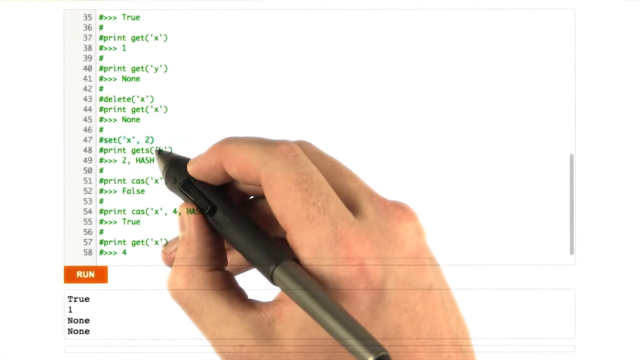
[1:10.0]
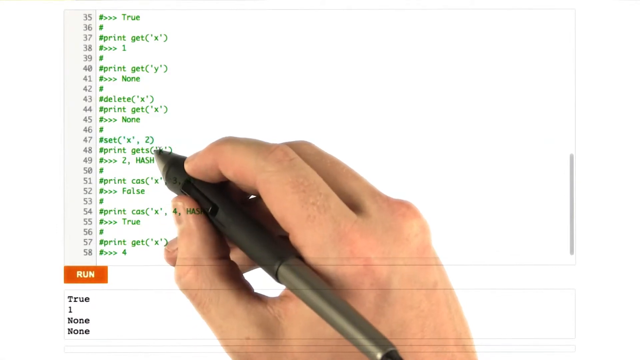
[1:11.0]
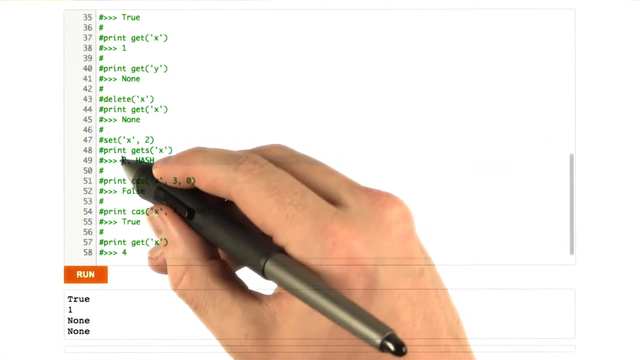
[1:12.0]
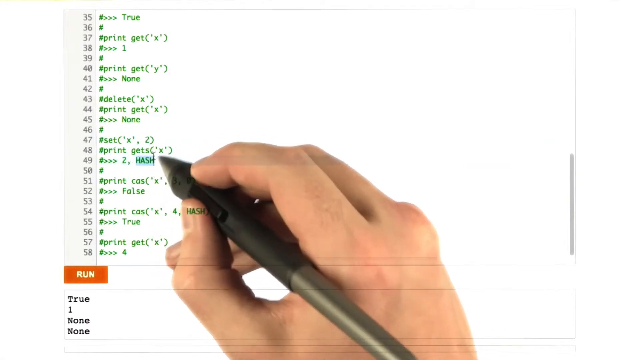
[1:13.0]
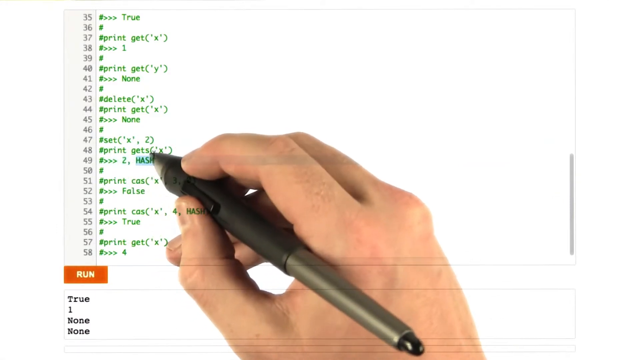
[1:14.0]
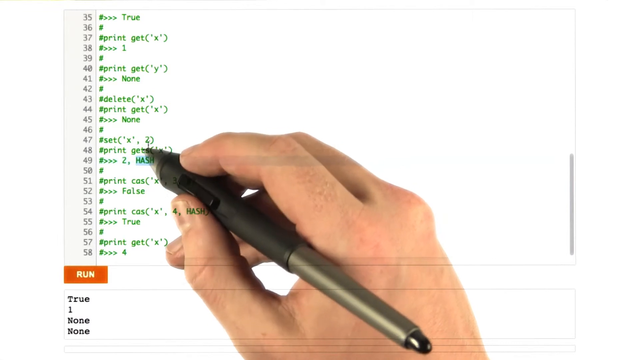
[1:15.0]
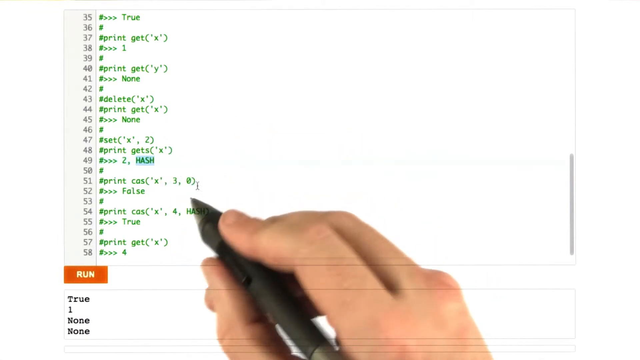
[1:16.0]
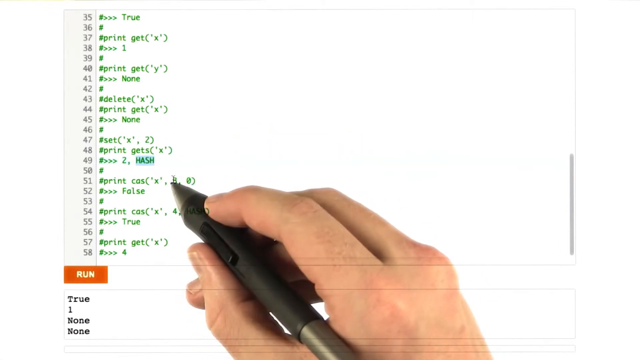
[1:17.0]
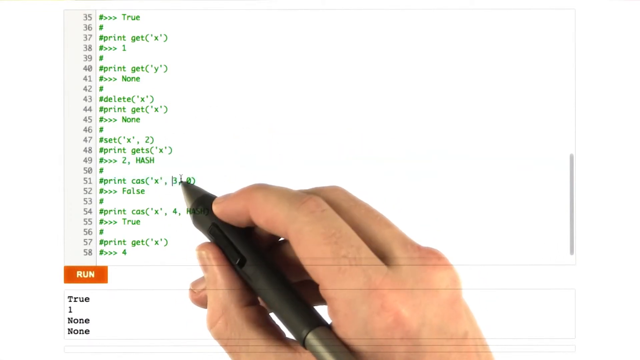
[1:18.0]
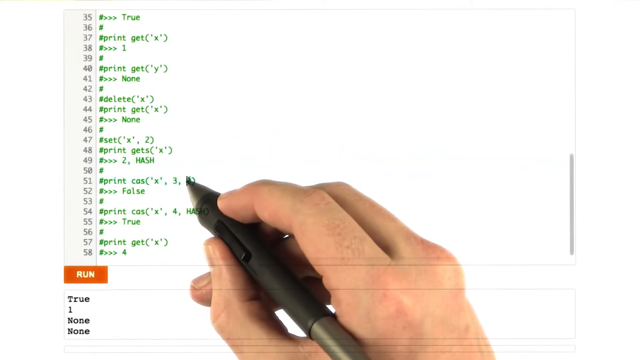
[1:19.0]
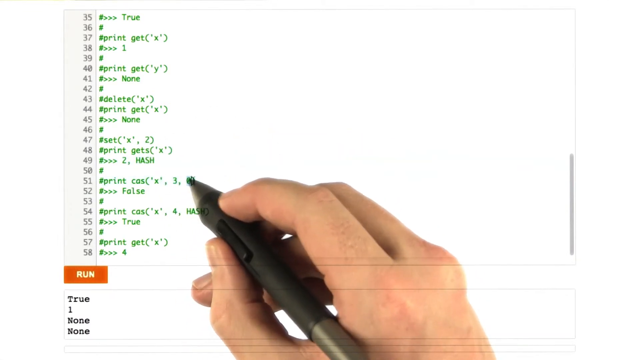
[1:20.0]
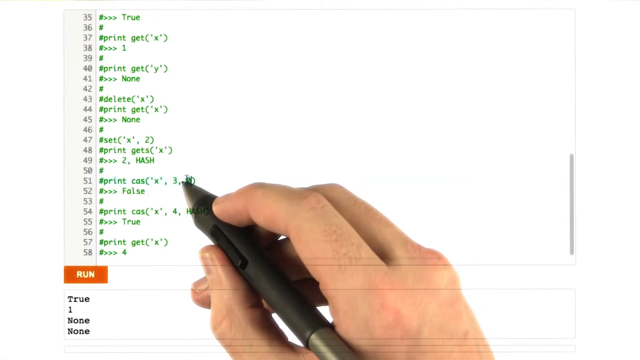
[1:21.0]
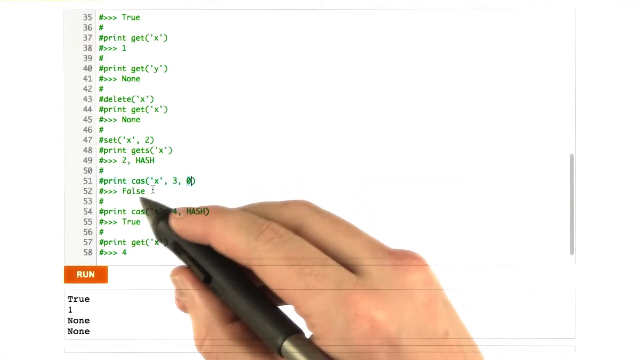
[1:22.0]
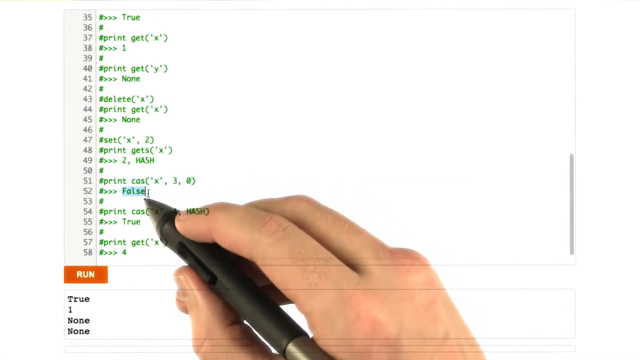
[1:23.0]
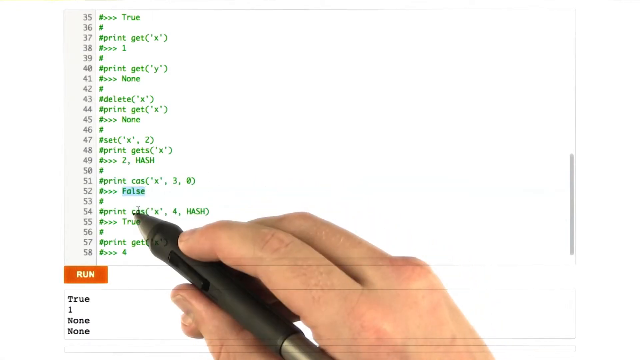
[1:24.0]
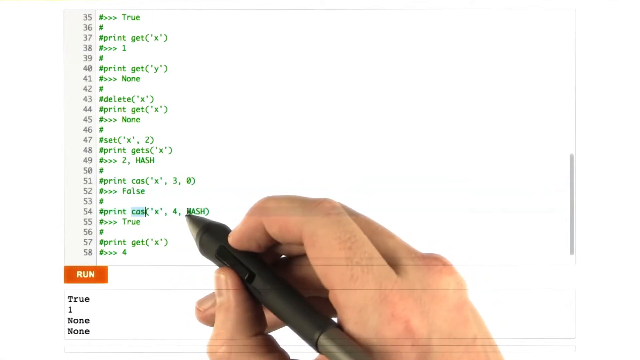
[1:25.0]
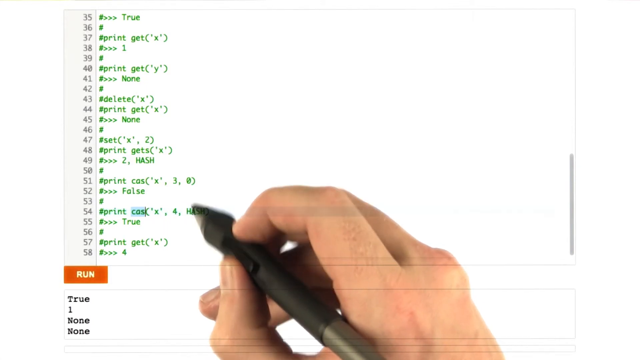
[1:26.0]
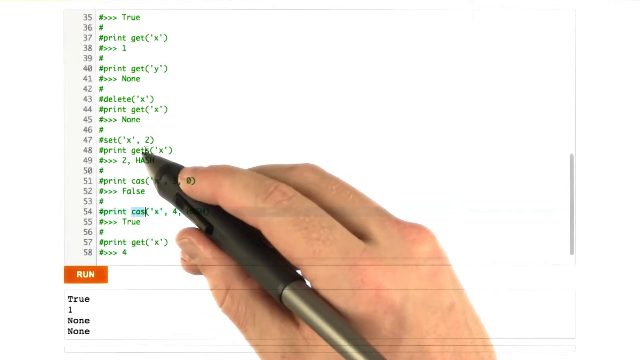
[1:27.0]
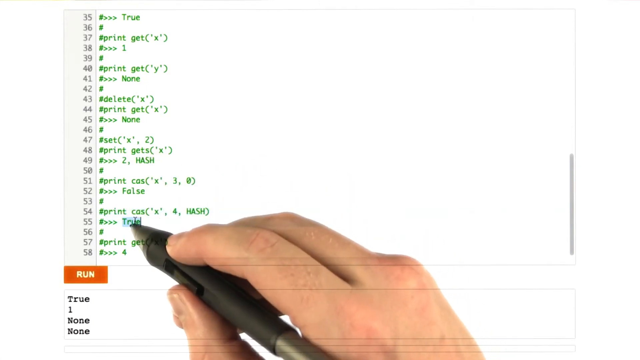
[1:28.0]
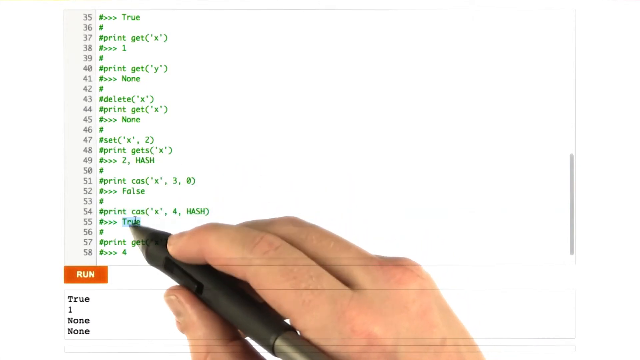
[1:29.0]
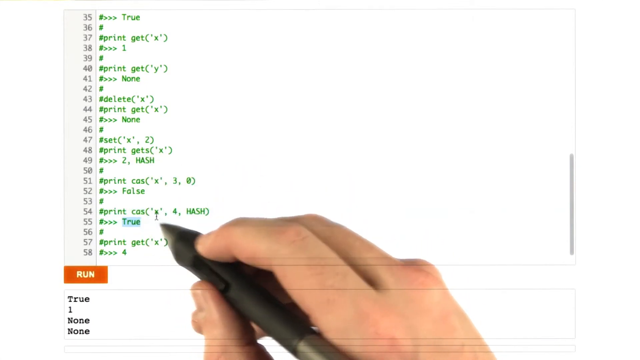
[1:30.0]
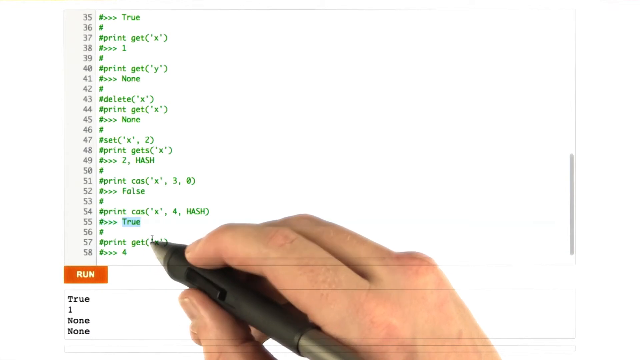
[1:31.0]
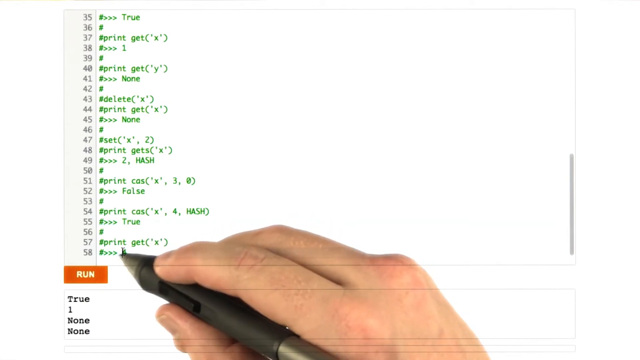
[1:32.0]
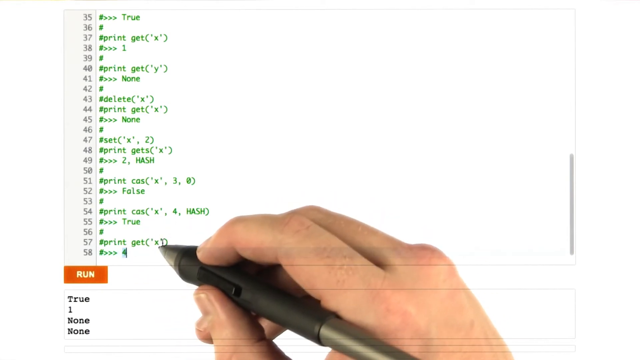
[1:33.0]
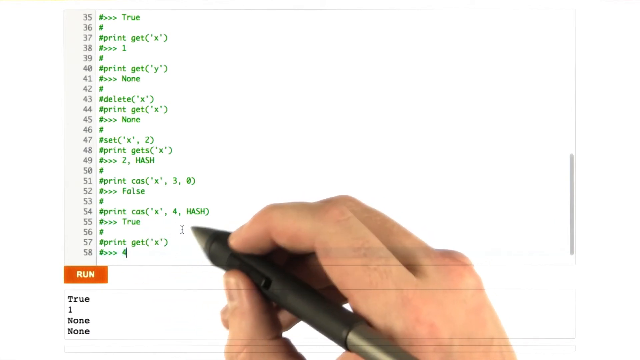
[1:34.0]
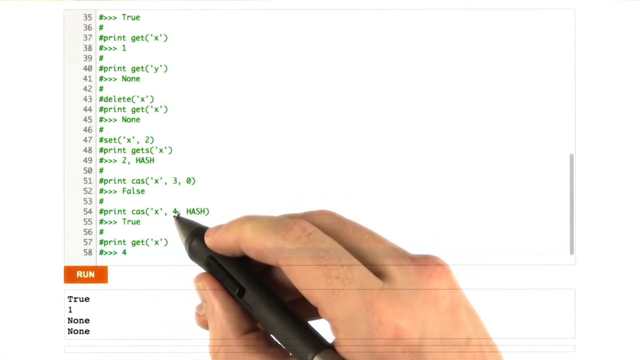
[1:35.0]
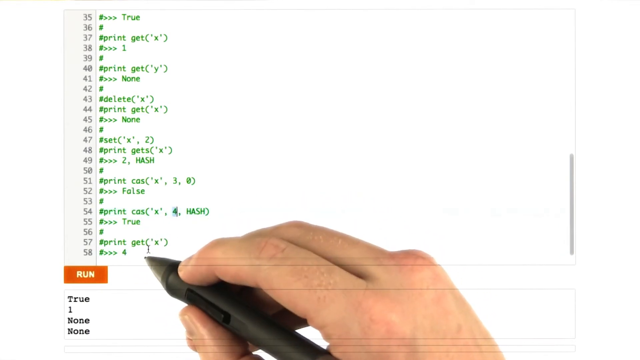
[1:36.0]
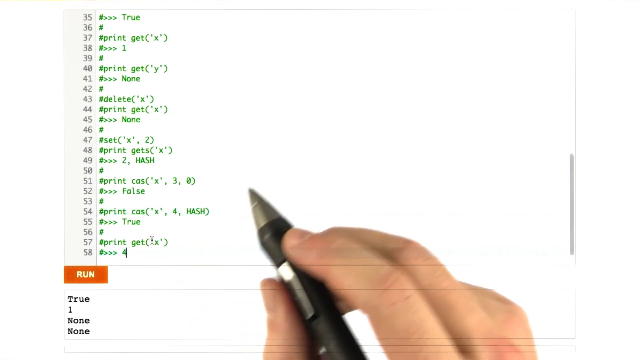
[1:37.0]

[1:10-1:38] The person now holds the pen in the normal grip people typically use when preparing to write. He immediately highlights the word "harsh" on line 49, moves up to line 47, moves back down to line 51, and makes a circle over the zero on line 51. He moves down to line 54 and highlights "C-A-S", then down to line 55 and highlights "true". He moves his hand back up to line 54, where the number four is now highlighted. As the screen scrolls up, he keeps circling and highlighting words erratically, moving up and down with no apparent pattern. The circles and underlining do not appear on the screen; only the highlighting does.